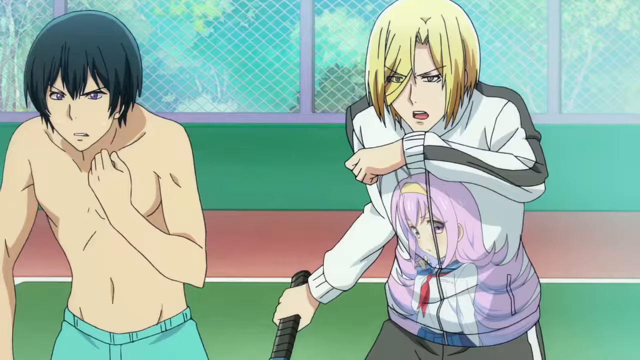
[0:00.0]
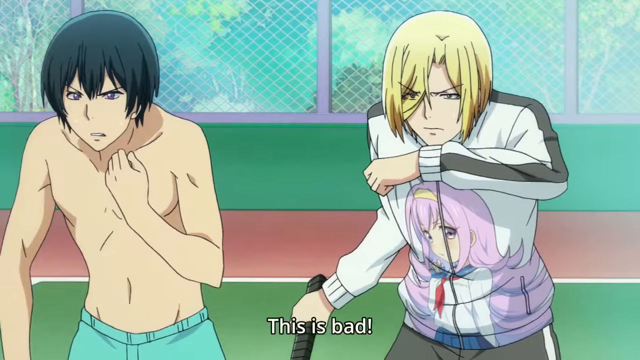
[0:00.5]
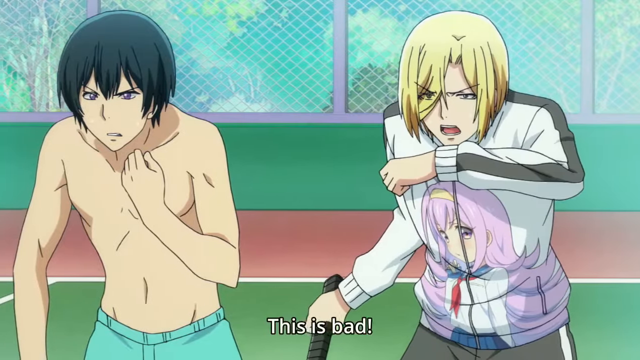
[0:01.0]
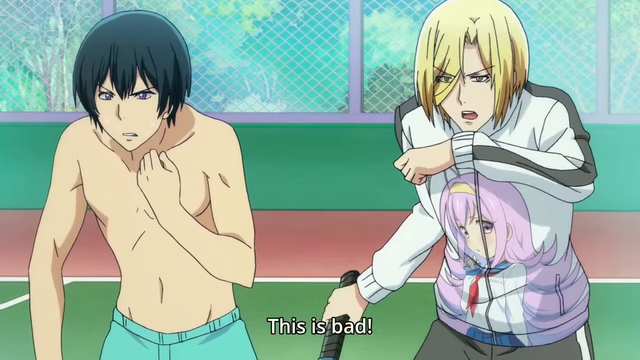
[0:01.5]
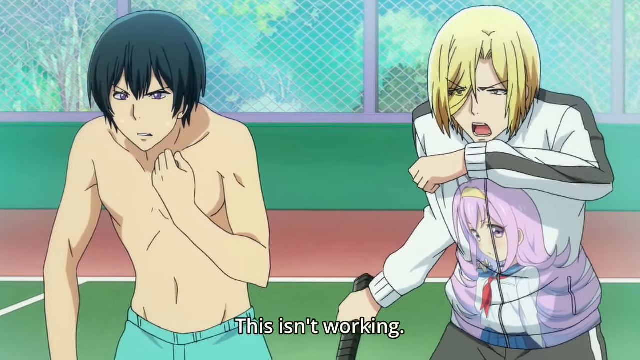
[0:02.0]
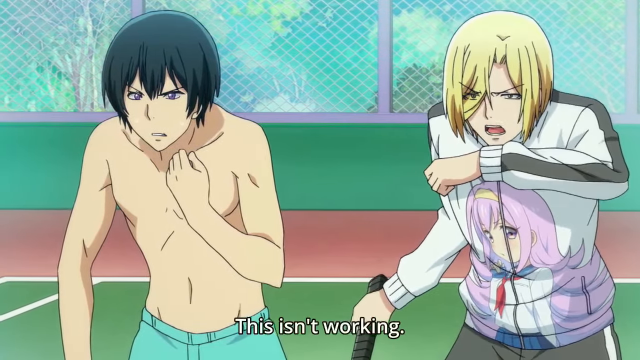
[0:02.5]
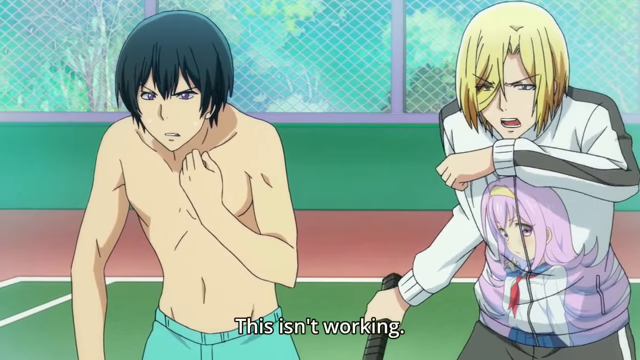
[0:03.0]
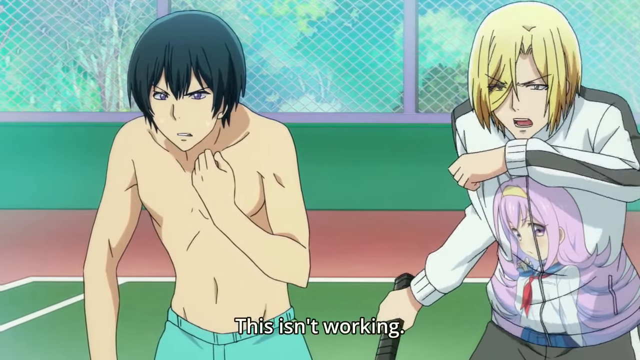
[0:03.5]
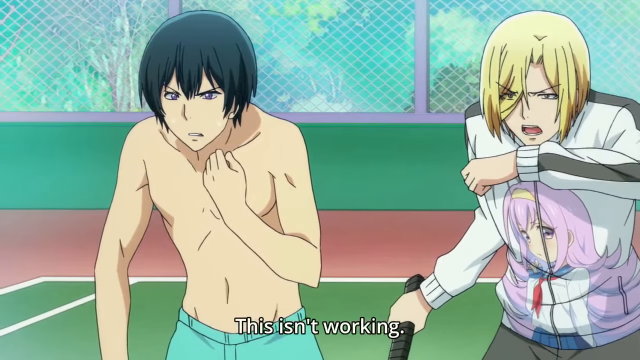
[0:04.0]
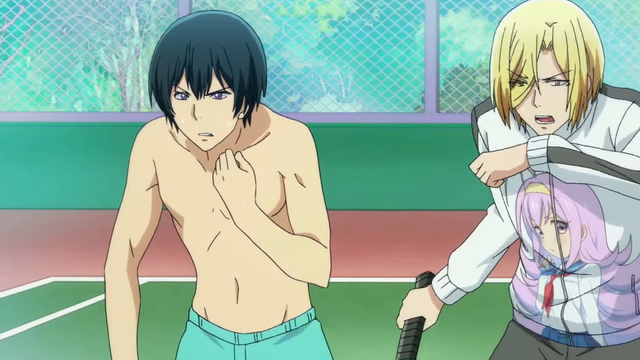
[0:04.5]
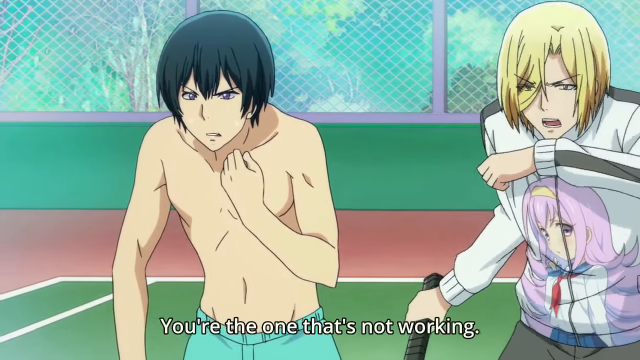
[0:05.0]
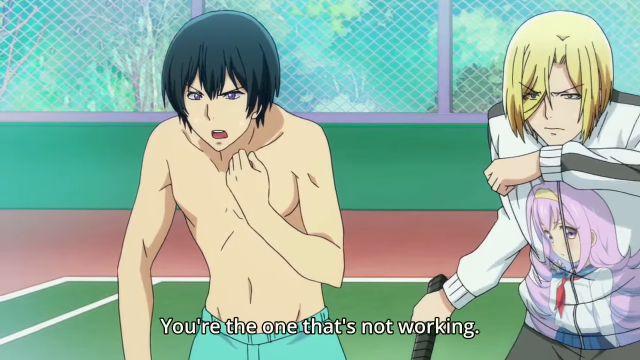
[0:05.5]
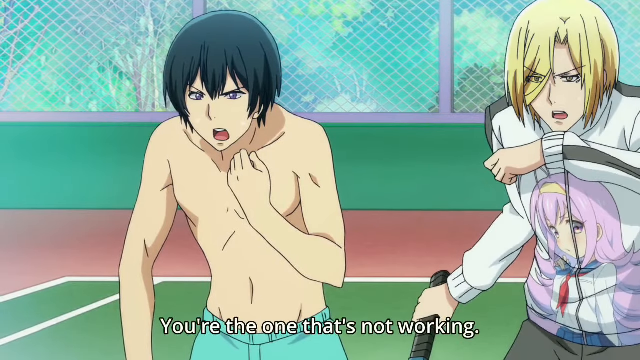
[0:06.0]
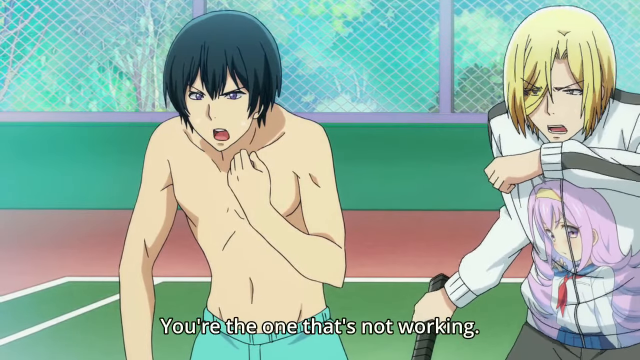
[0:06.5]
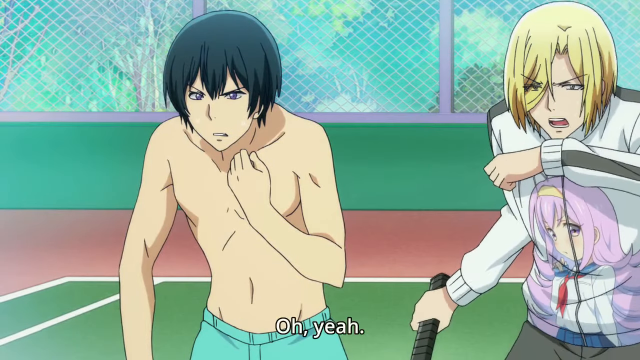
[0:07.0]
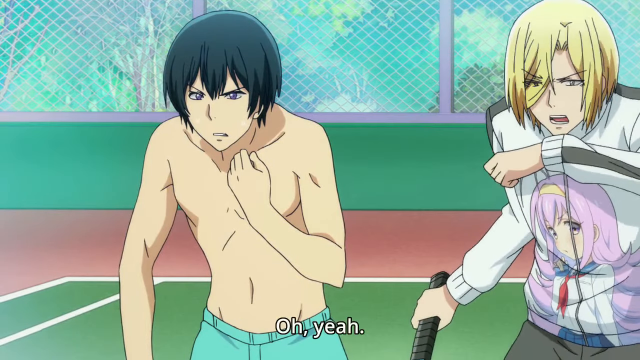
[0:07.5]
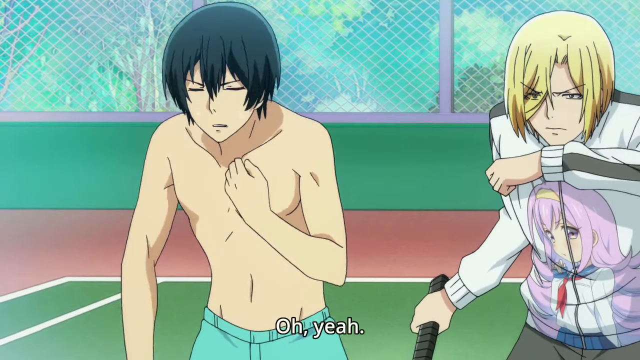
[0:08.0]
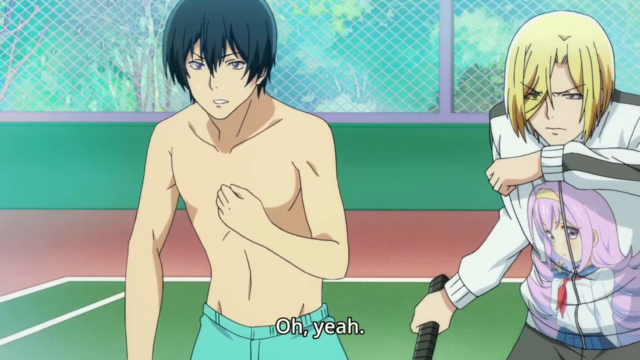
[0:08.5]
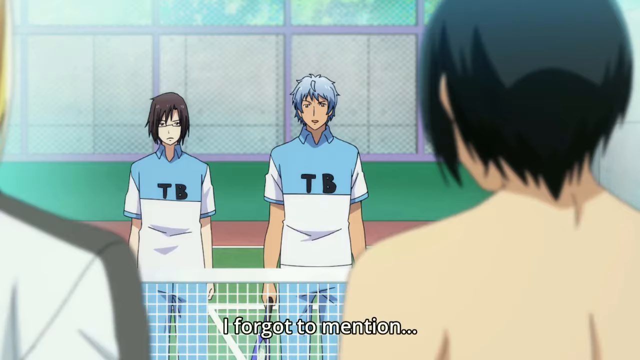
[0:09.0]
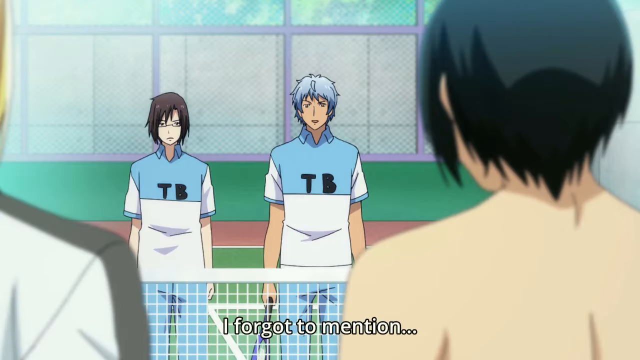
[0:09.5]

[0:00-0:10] In an animated video, two people are shown. On the left is a man with short black hair; he wears no top, so he is bare-chested, and he has a pair of blue trousers. He is standing next to a woman with short blonde hair who wears a tracksuit top with a figure of a woman on it. She holds a tennis racket in her right hand and has her left hand raised in front of her. They look across a tennis court at two other players and talk, saying "you're the one that's not working. Oh, yeah." The other two players then appear at the other side of the tennis court, standing and talking to the other team. They wear blue tops with the letters "TB" written on them.